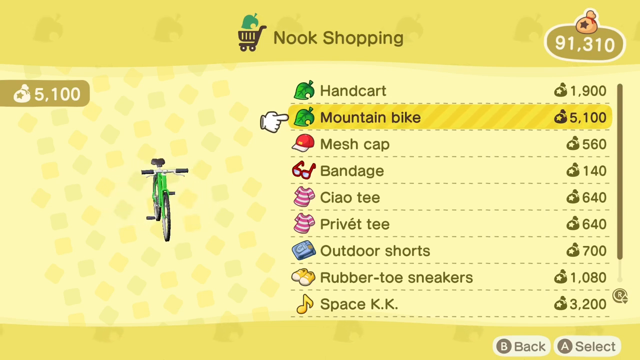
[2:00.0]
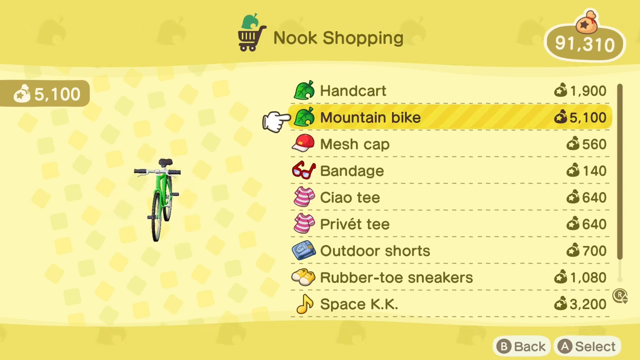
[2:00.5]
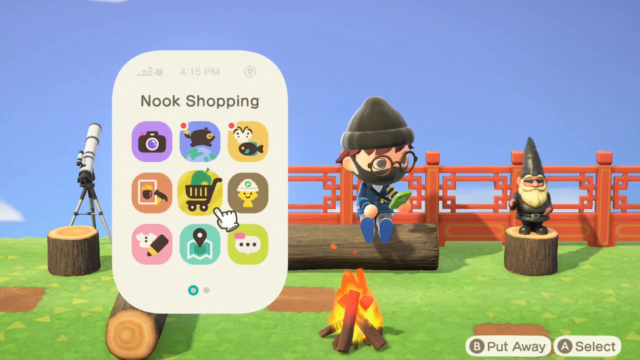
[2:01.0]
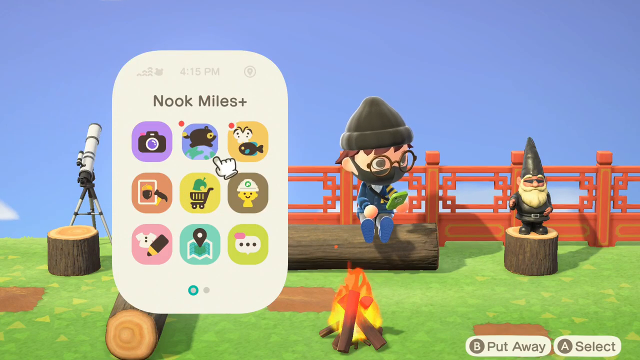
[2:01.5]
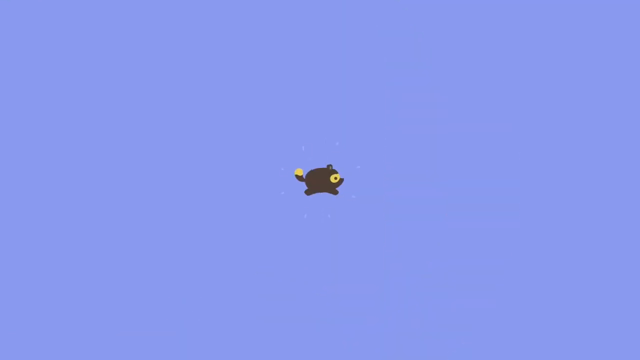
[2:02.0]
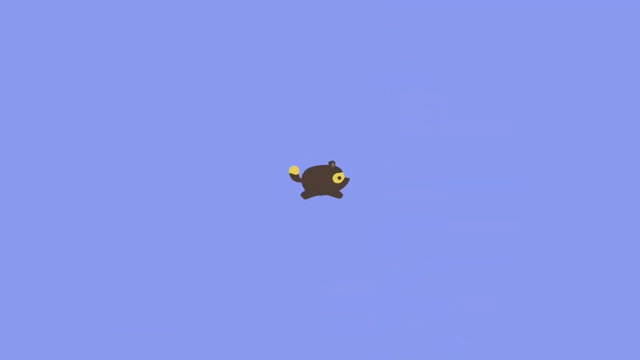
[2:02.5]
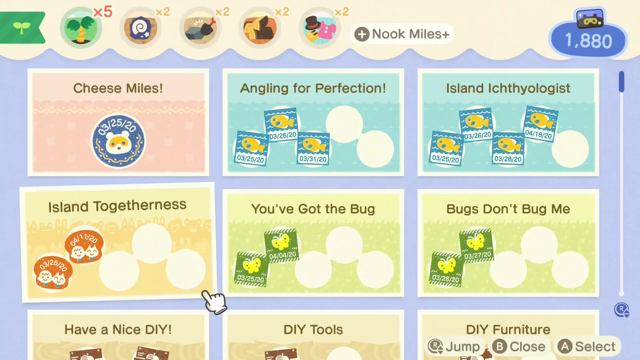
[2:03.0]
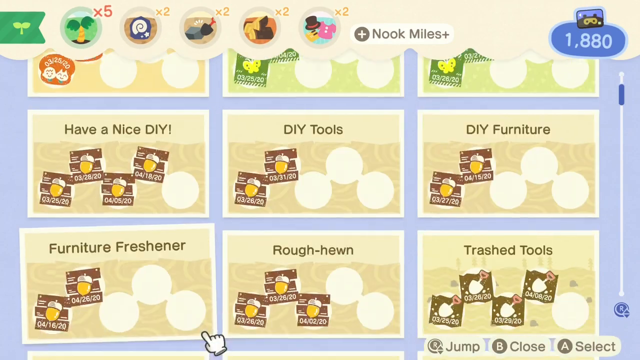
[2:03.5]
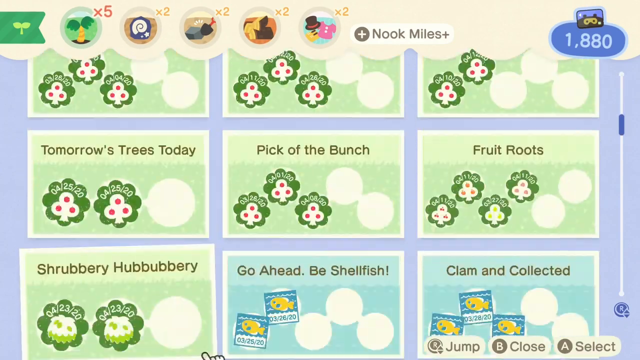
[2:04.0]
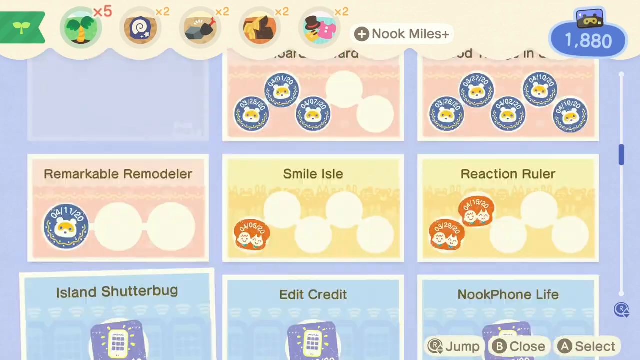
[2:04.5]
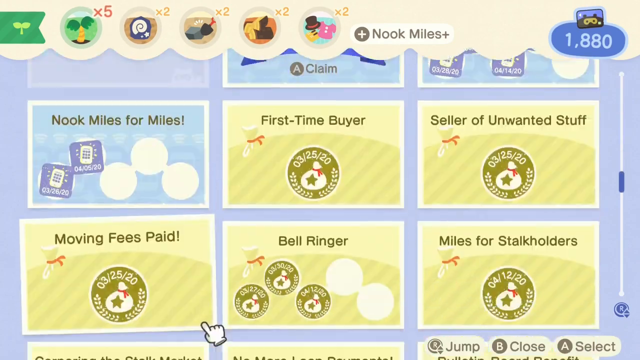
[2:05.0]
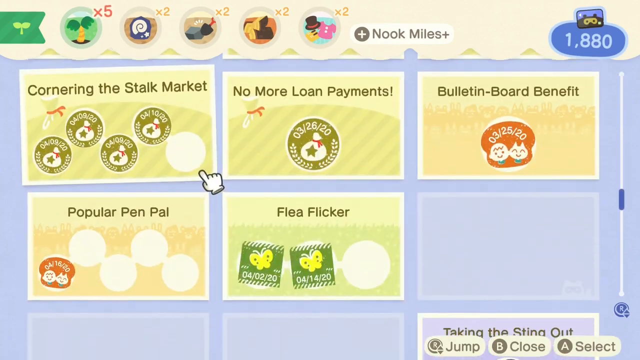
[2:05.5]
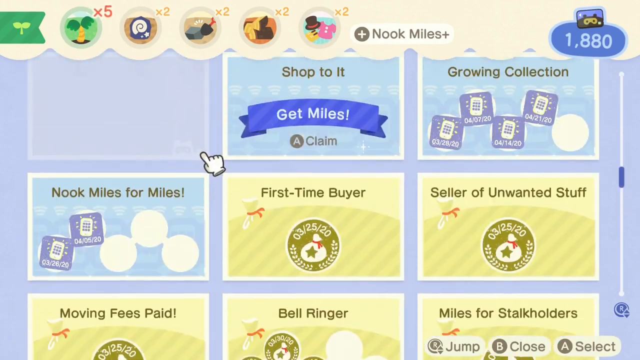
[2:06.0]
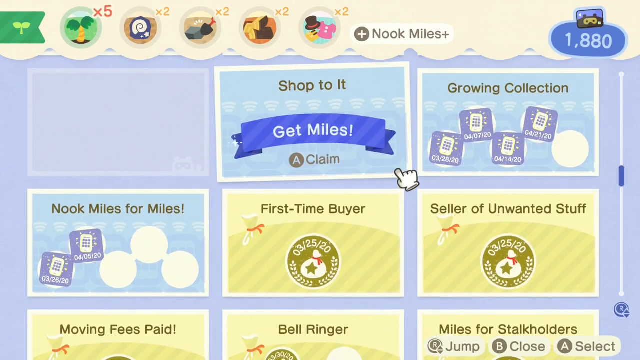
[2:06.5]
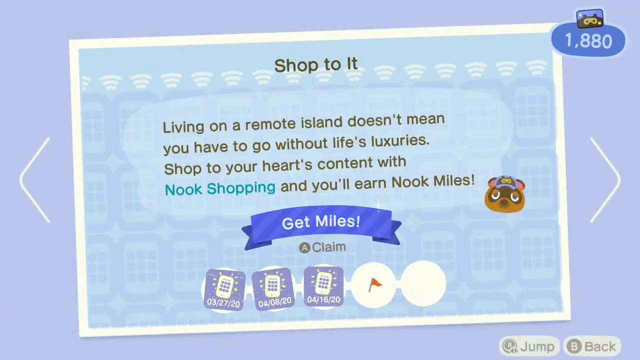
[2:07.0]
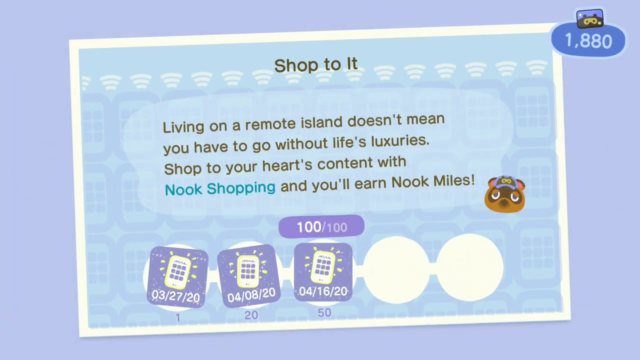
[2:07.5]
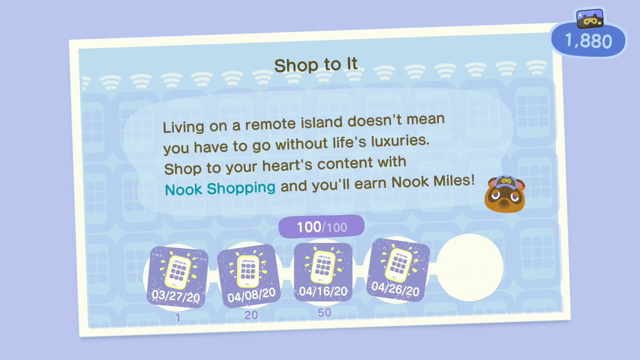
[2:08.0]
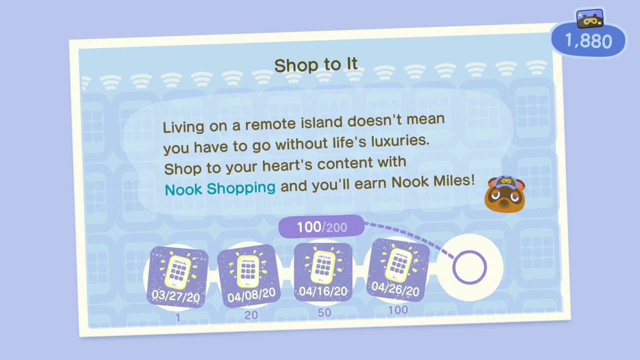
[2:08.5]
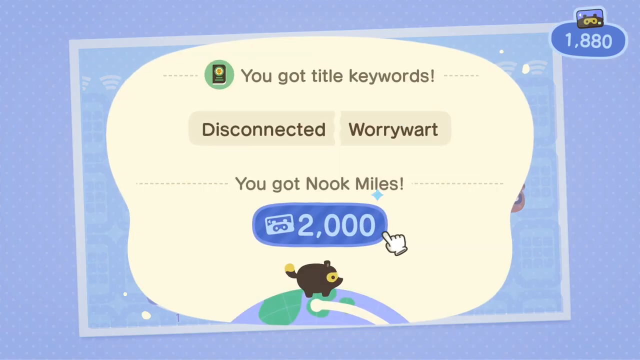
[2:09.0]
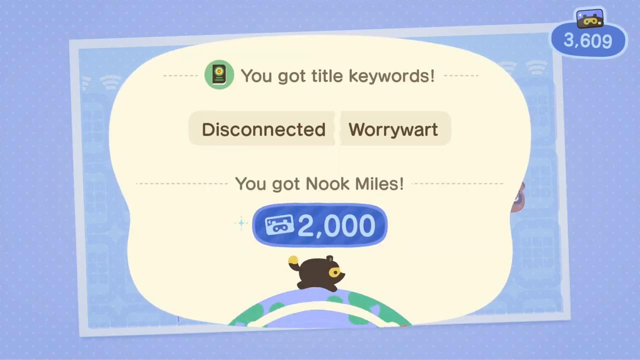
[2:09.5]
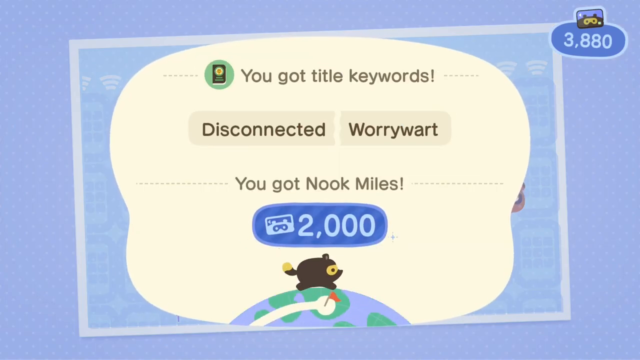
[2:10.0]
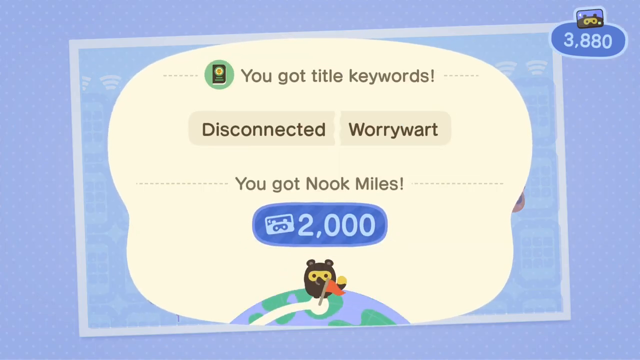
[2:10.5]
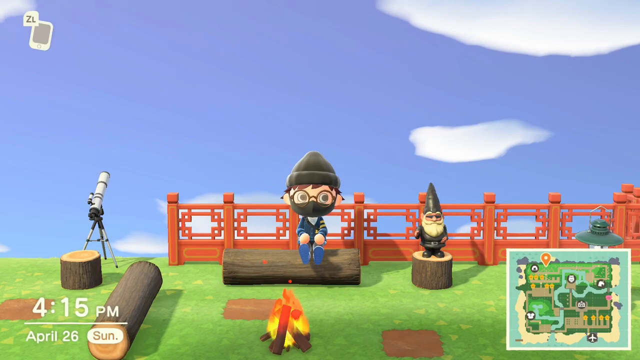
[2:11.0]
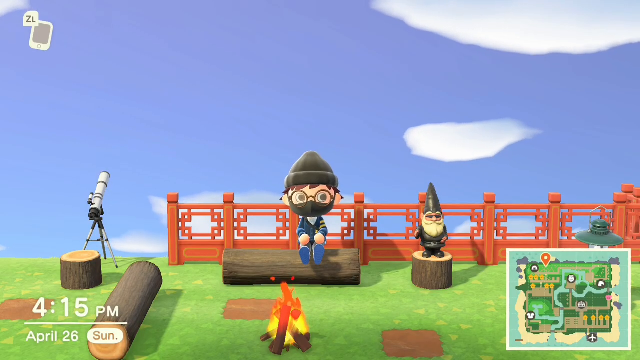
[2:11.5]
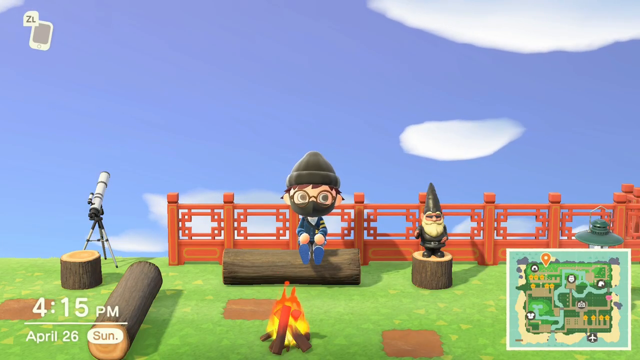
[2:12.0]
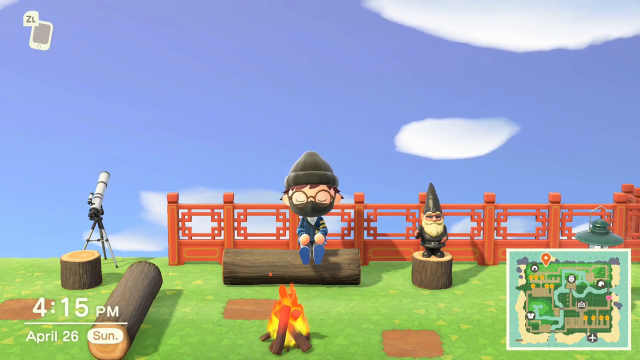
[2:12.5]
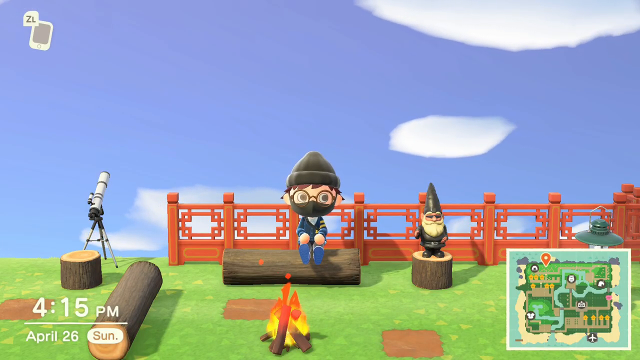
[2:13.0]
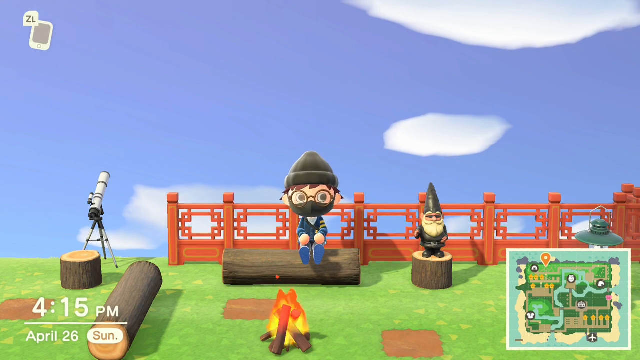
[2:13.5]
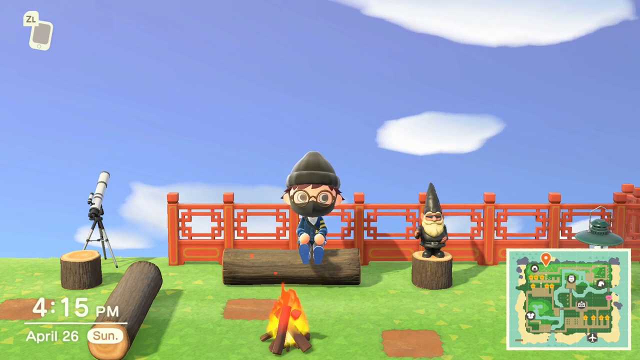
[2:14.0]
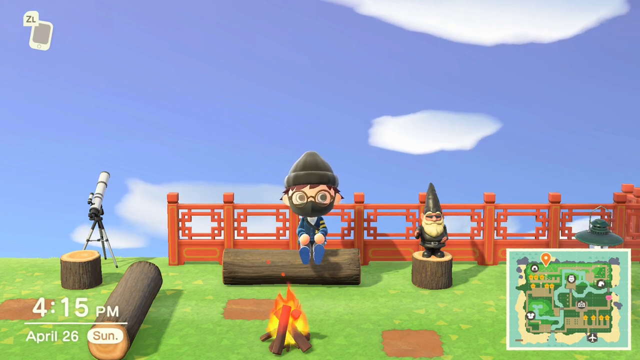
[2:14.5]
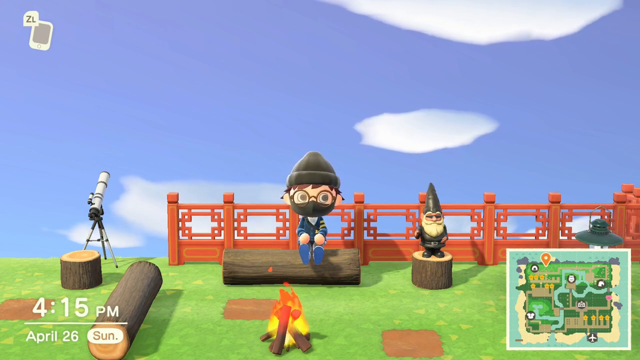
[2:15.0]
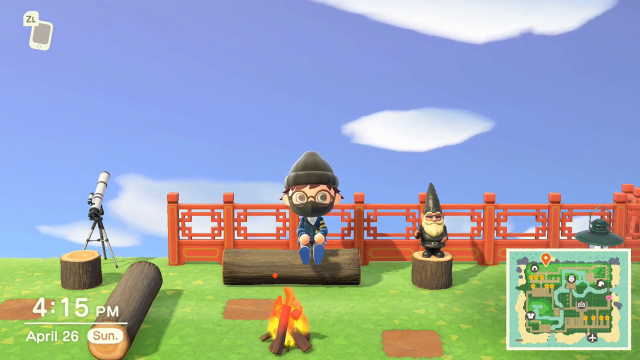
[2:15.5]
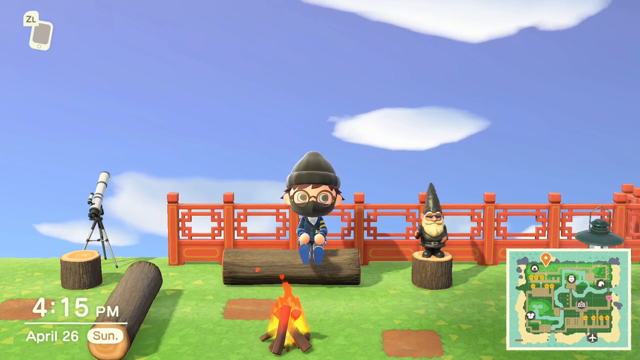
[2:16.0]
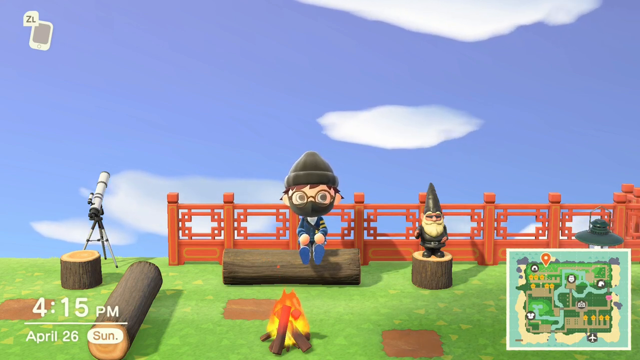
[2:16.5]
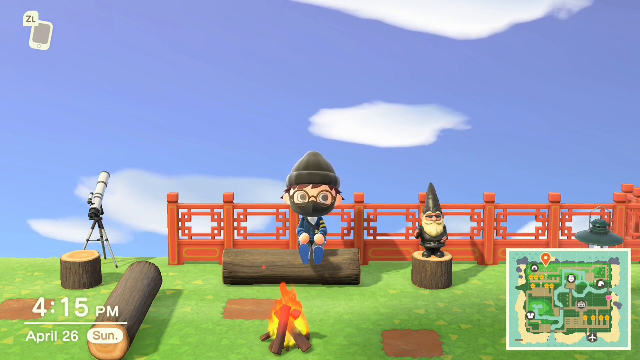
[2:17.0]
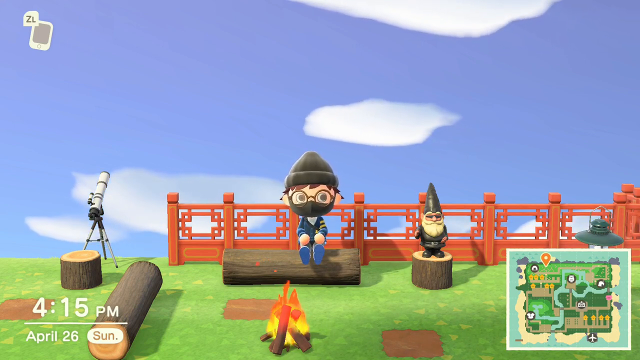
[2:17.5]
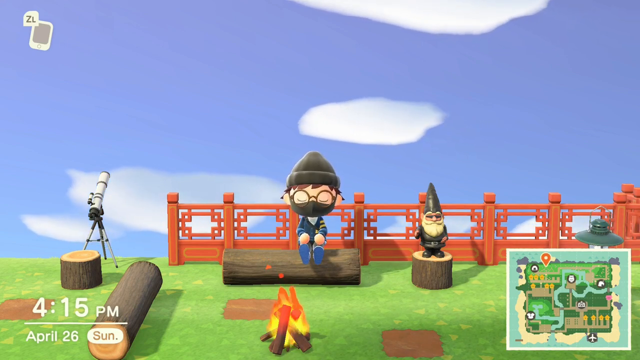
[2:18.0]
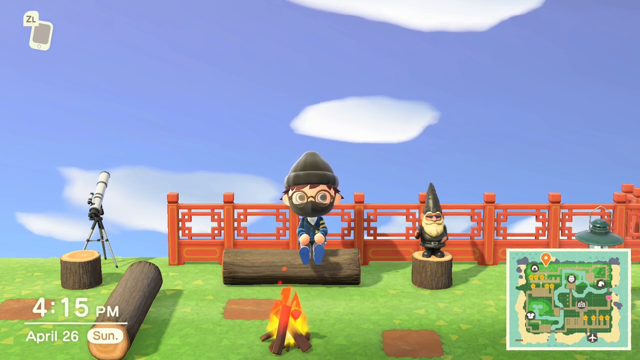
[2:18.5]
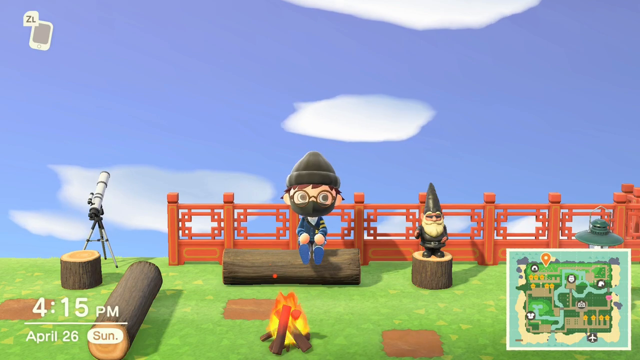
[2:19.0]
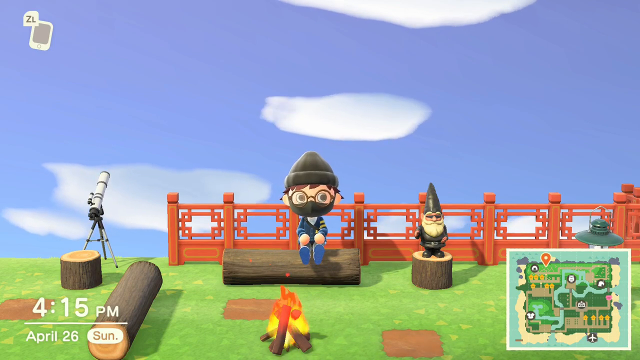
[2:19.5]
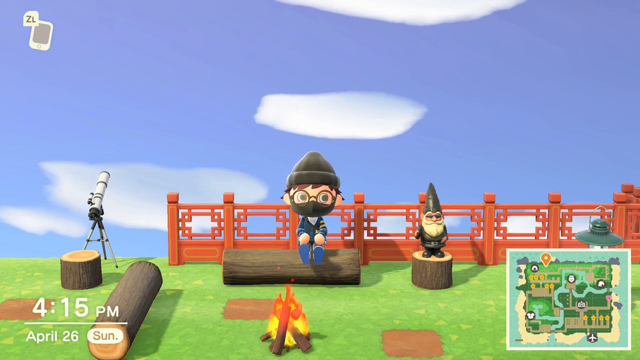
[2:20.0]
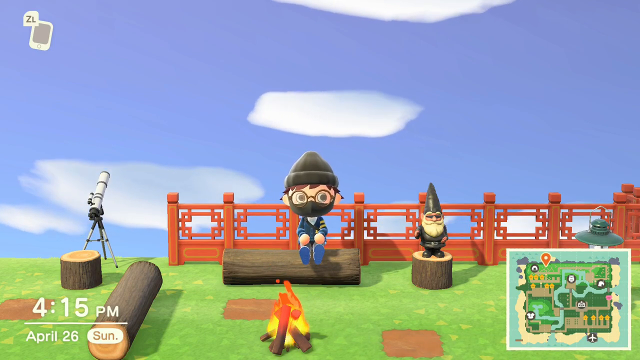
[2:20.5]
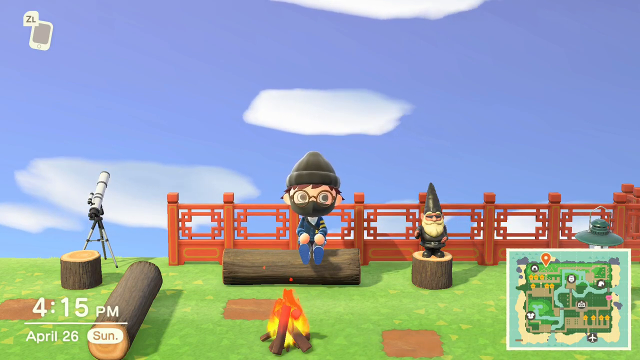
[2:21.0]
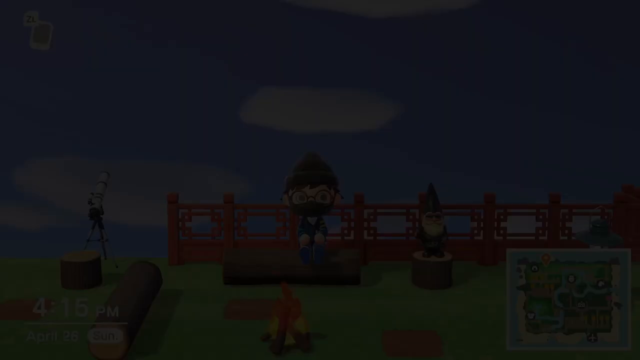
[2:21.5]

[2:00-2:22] A map is displayed next to the listing; it is green and rotating. The character is then seen in a different part of their island, sitting on a wooden bench in front of a campfire. A large gnome is on top of a wooden trunk next to the character, and a red fence is behind the character. The character navigates through their phone again, opens the Nook Miles screen, scrolls down through the categories and opens the Shop To It category again. The achievement is now at 100 out of 100, and they have received 2,000 Nook Miles for completing it, along with two title keywords: Disconnected and Worrywart. The character then sits resting on the bench. The time is displayed at the bottom of the screen as 4:15 pm. The fire crackles in front of the character, and white clouds move in the background.